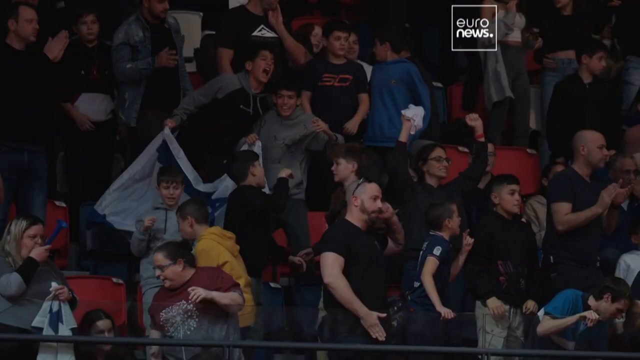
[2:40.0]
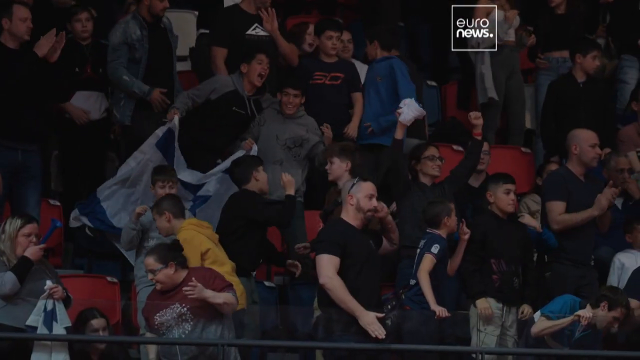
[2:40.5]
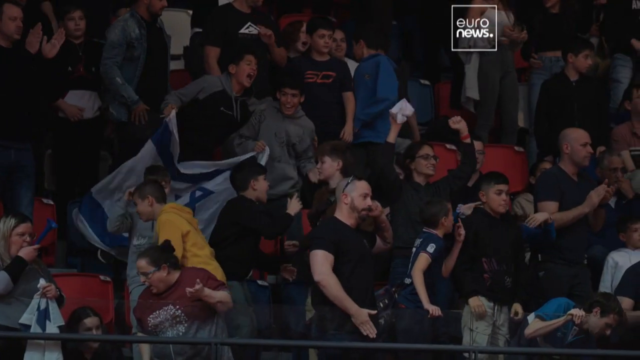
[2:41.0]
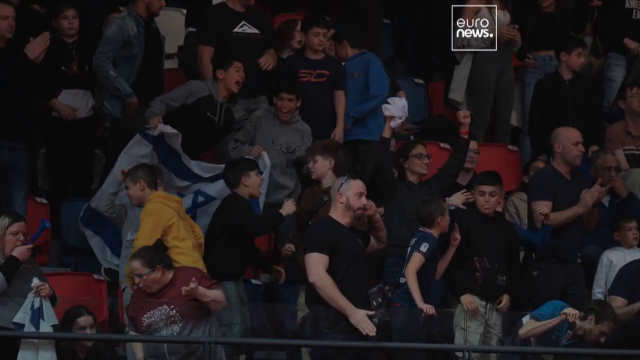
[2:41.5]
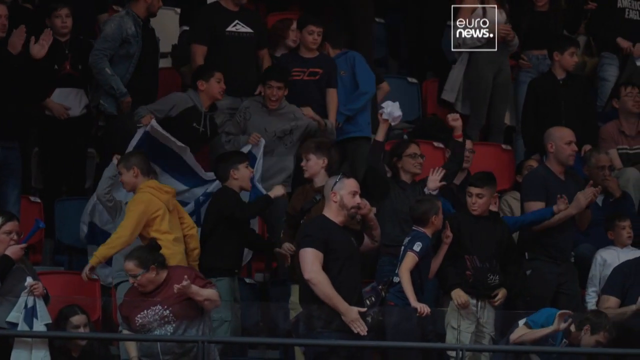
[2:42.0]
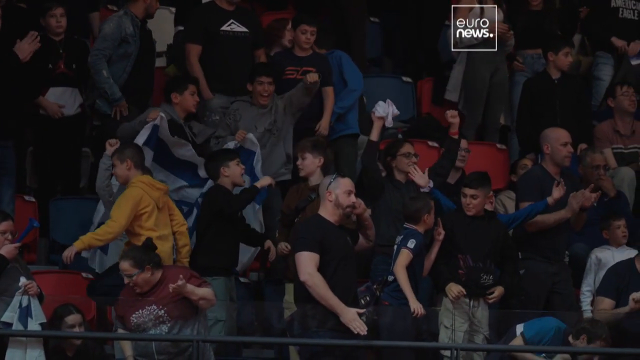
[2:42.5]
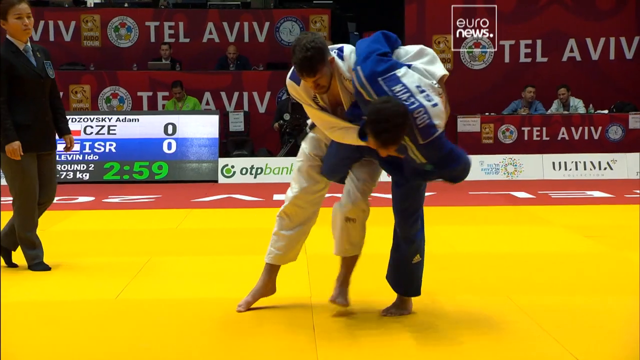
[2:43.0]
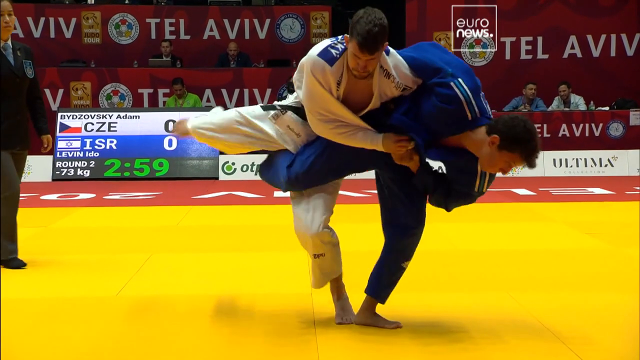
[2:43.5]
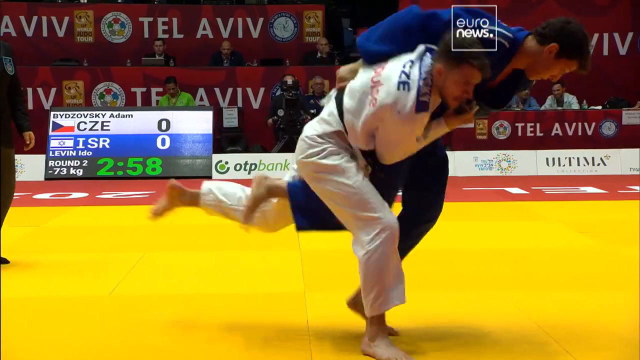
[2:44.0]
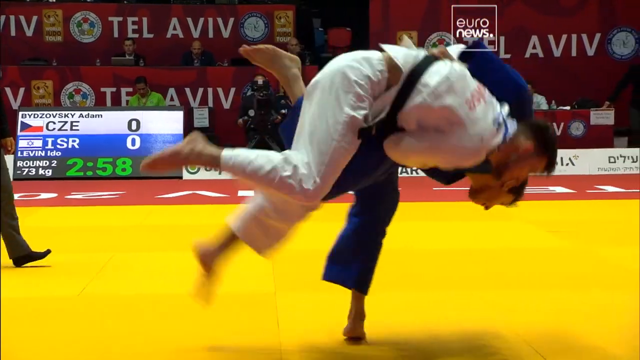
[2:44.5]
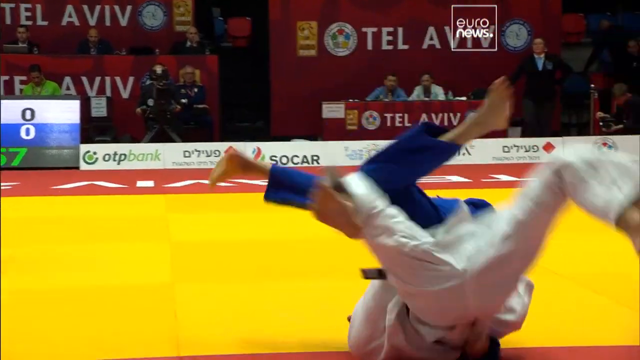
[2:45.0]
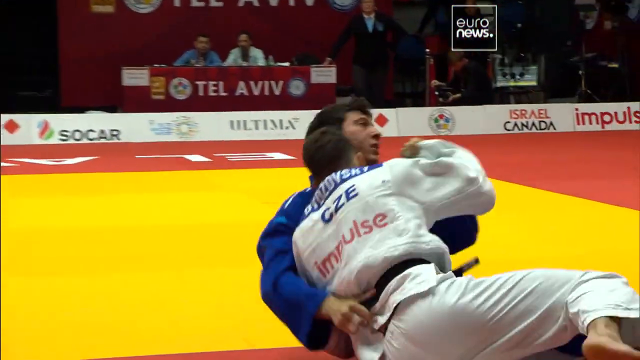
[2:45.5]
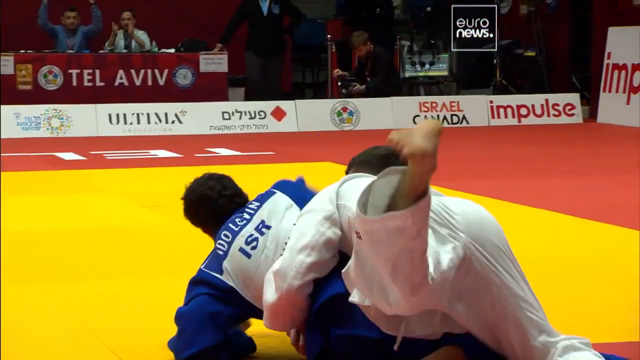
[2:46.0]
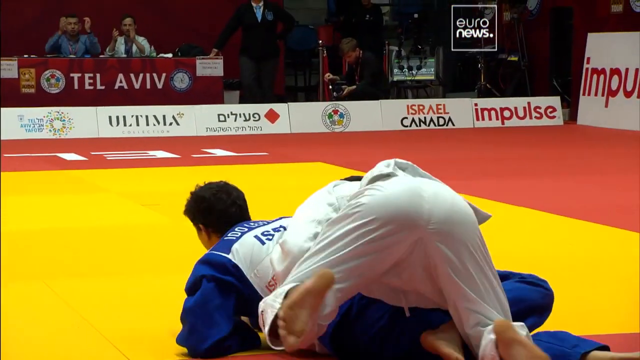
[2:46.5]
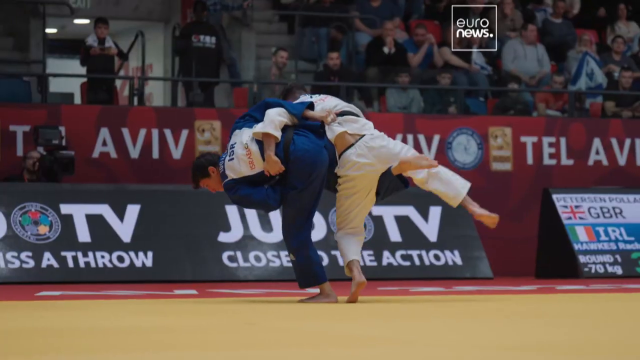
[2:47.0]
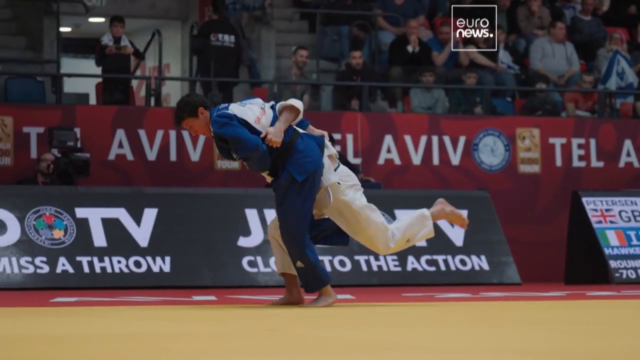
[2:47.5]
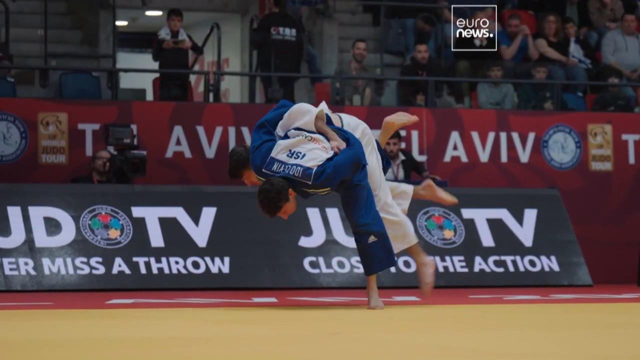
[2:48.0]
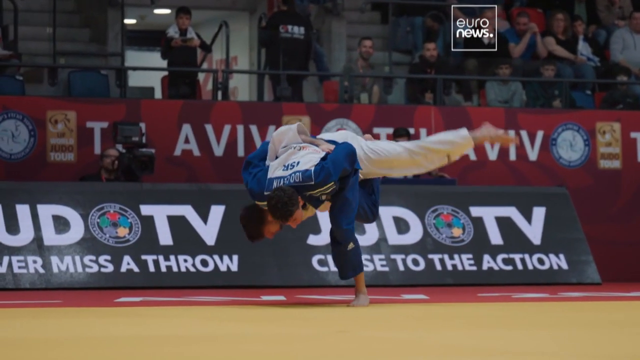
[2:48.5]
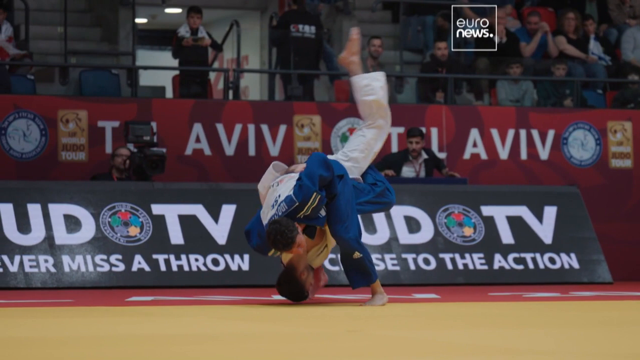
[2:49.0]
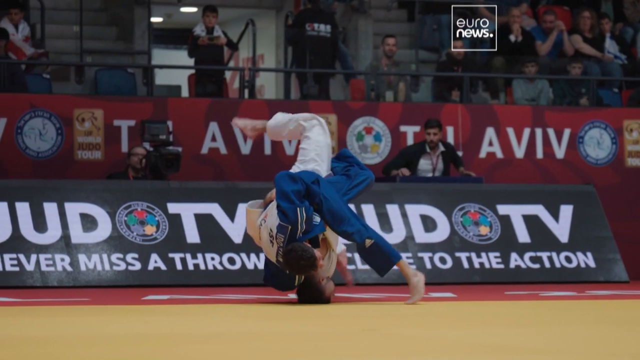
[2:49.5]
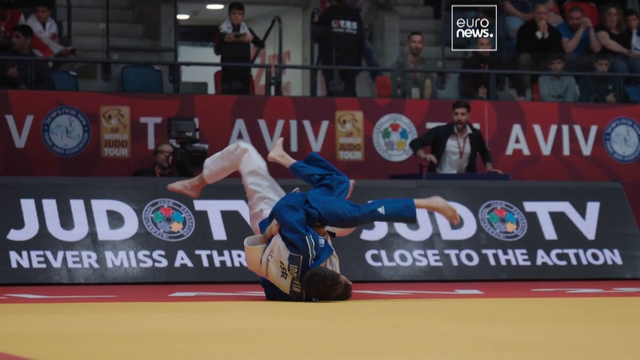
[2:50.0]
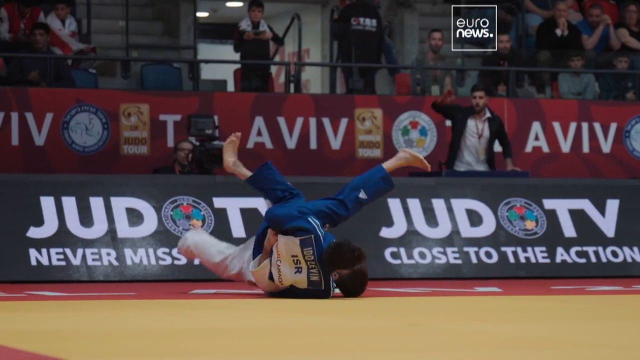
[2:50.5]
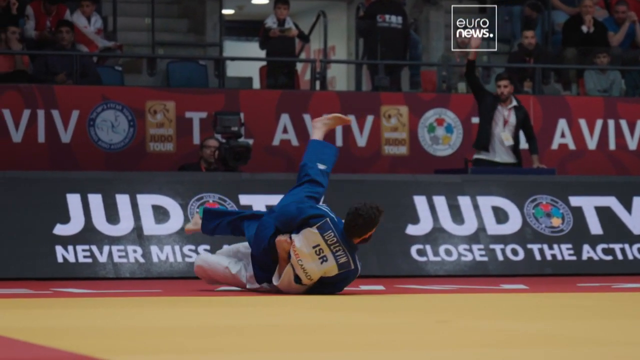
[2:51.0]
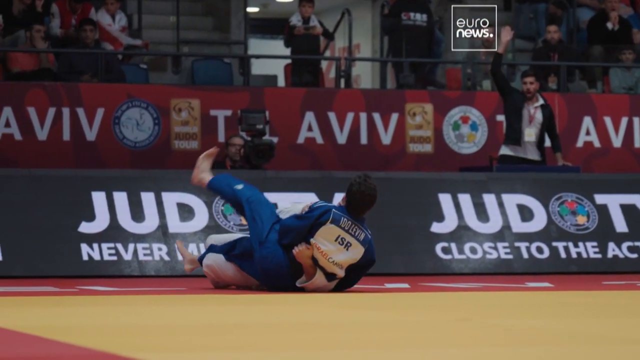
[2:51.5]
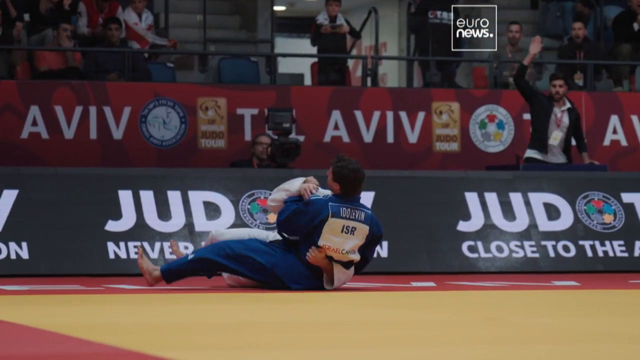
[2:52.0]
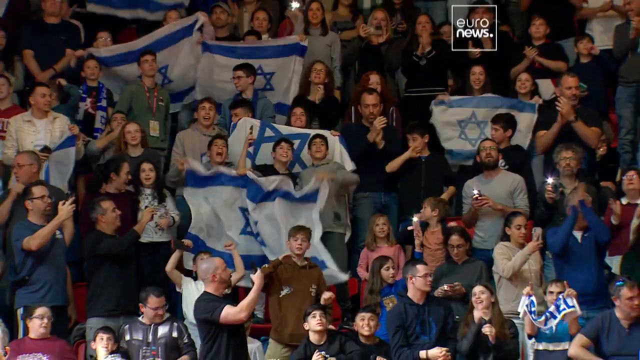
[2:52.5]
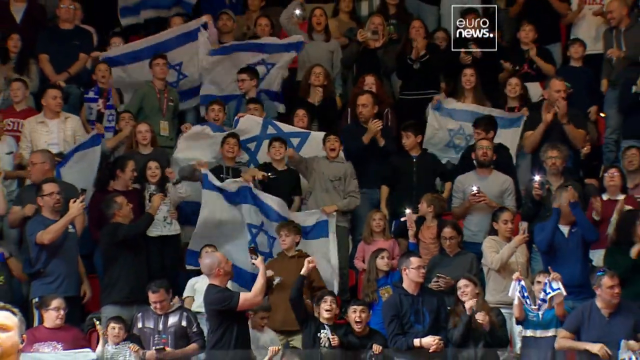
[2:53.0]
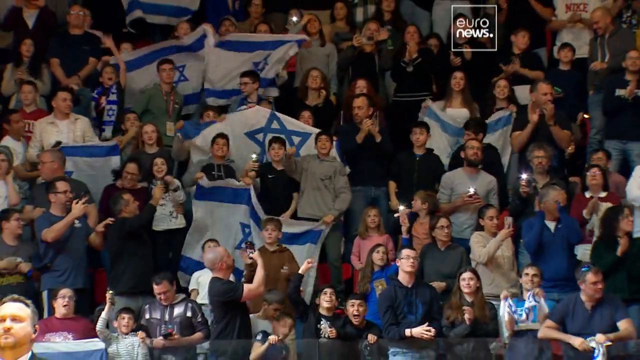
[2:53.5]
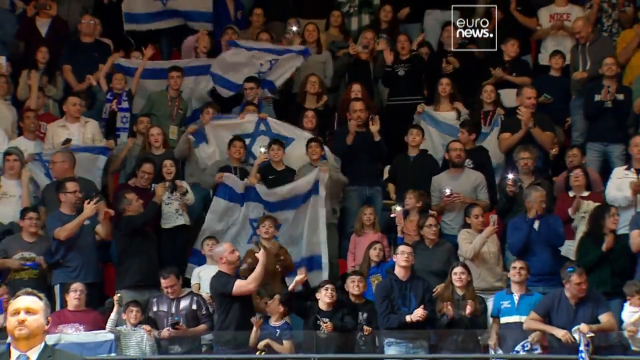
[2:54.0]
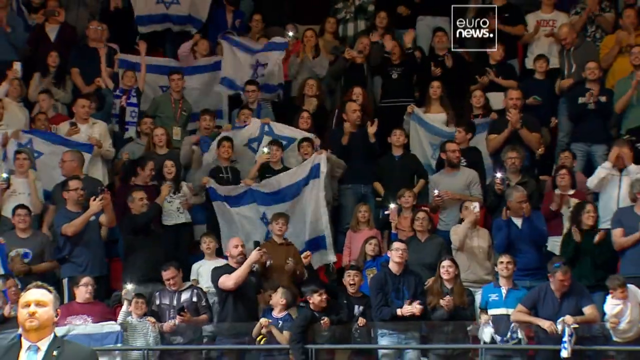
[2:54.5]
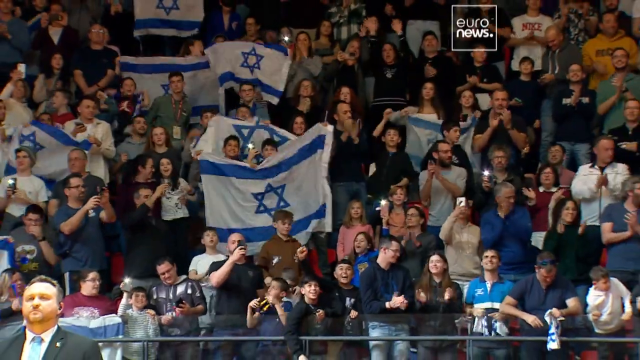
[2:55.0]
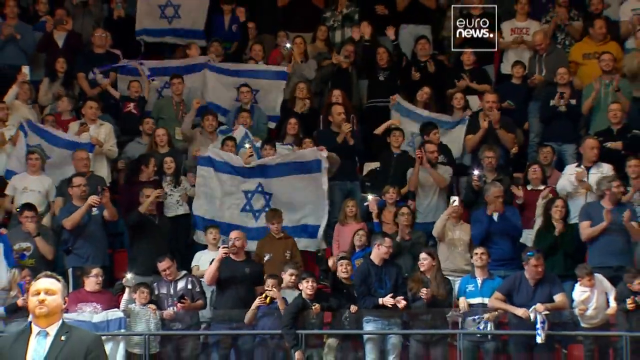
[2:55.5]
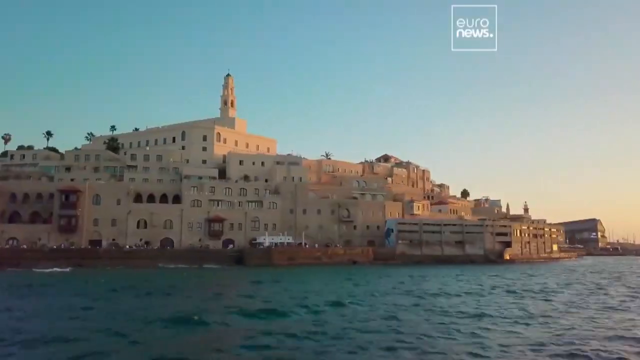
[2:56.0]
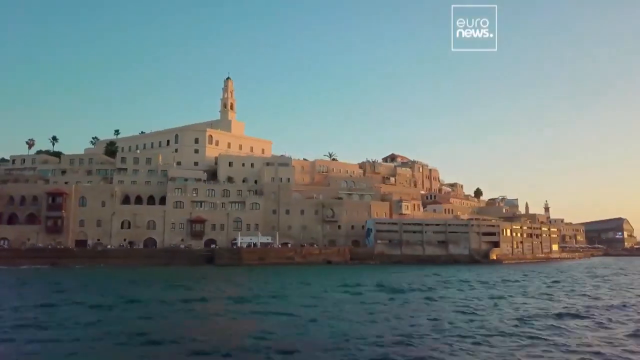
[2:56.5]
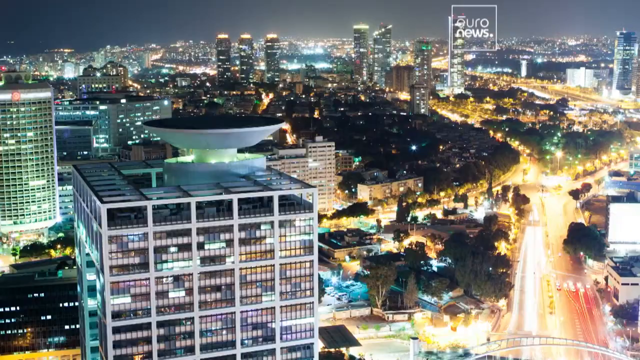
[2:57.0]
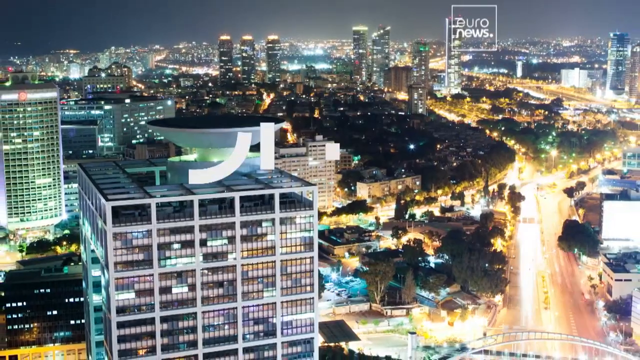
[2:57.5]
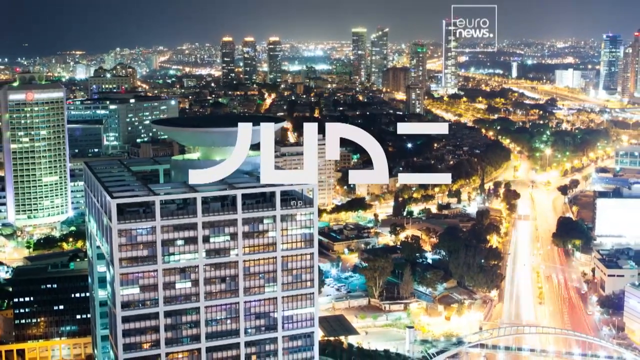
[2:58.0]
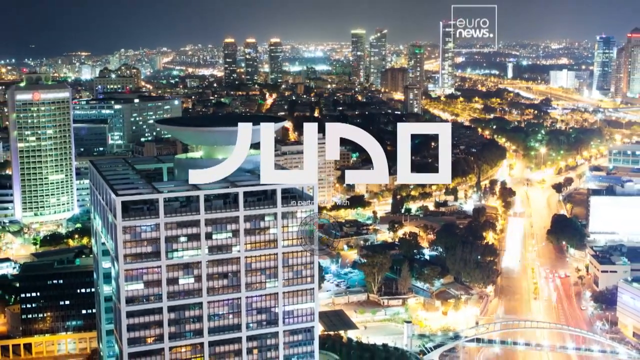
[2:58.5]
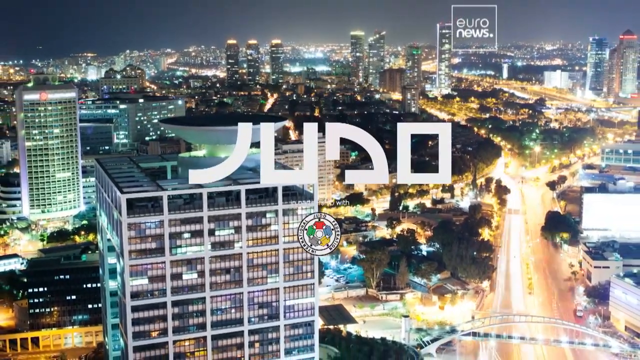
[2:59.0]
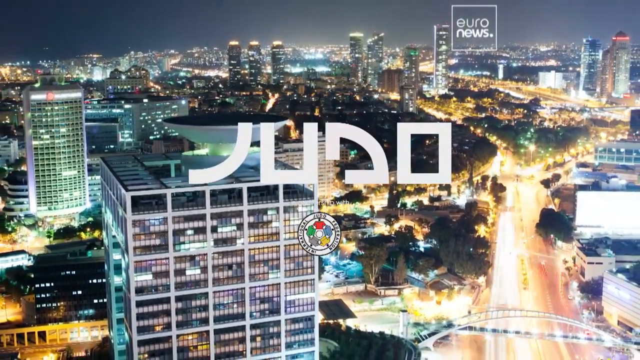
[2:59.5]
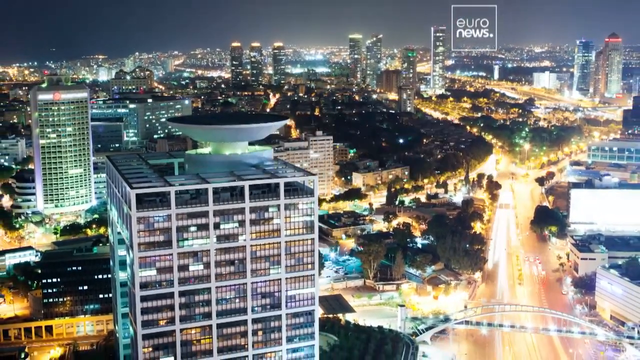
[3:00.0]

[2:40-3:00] The crowd at the Tel Aviv stadium is shown, then a judo fight between a man in a white uniform and a man in a blue uniform. The man in blue appears to try to flip the man in white; "ISR" is written on him, apparently another Israeli fighter. The crowd is shown again, many people chanting and waving, with young boys holding an Israeli flag. The video cuts to different scenes of a city, and the letters "JUDO" appear on the screen. At the end, buildings and scenery of the area around Tel Aviv, where the tournament takes place, are highlighted.